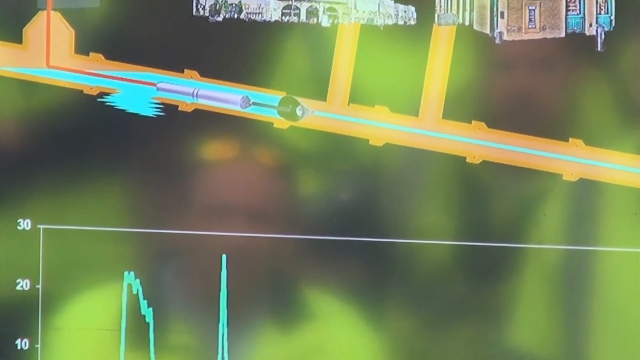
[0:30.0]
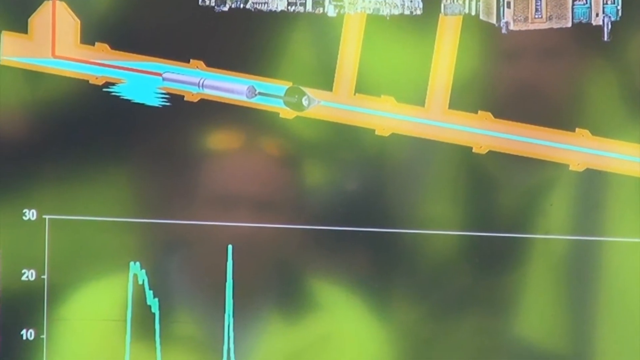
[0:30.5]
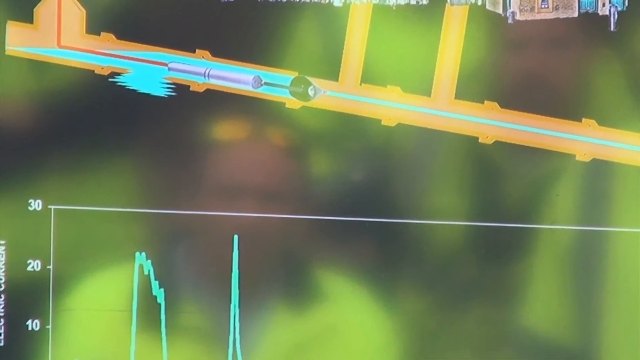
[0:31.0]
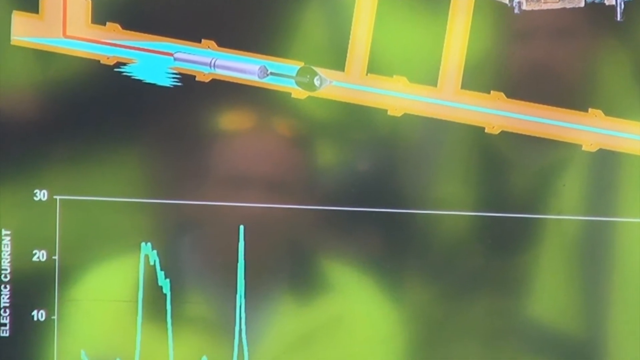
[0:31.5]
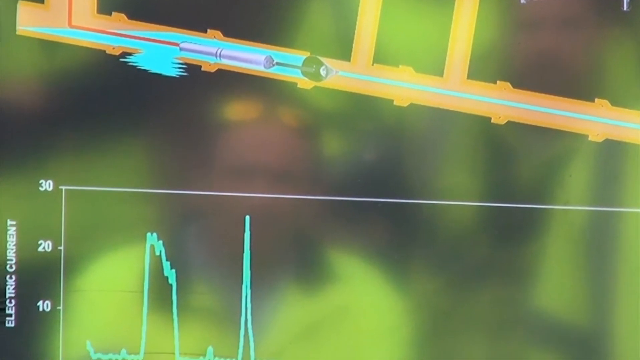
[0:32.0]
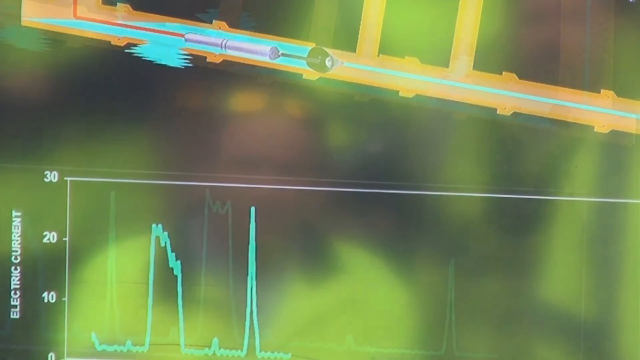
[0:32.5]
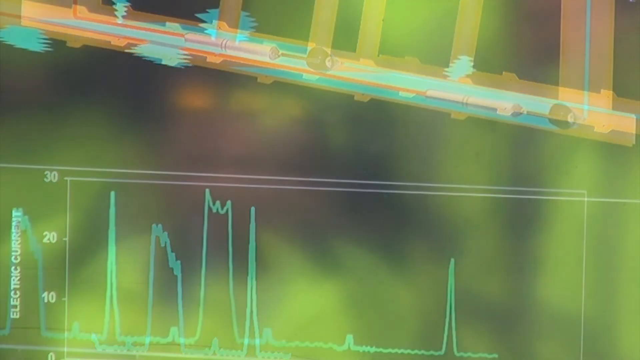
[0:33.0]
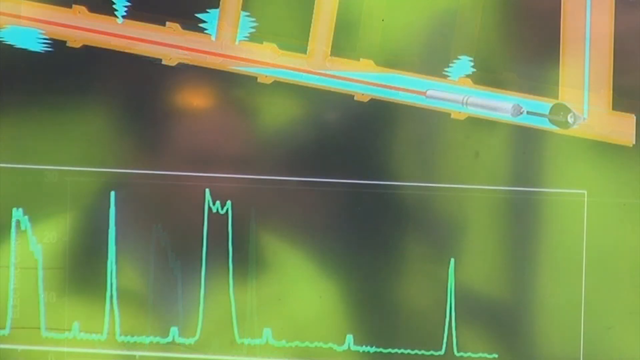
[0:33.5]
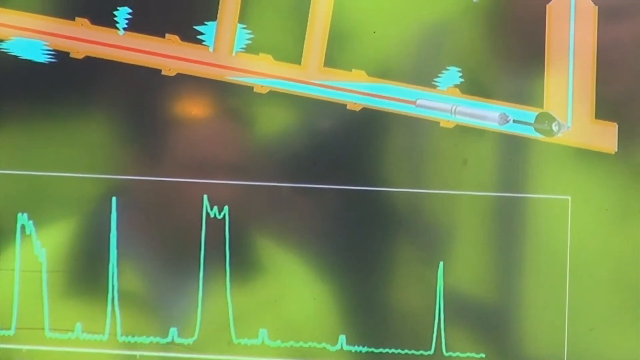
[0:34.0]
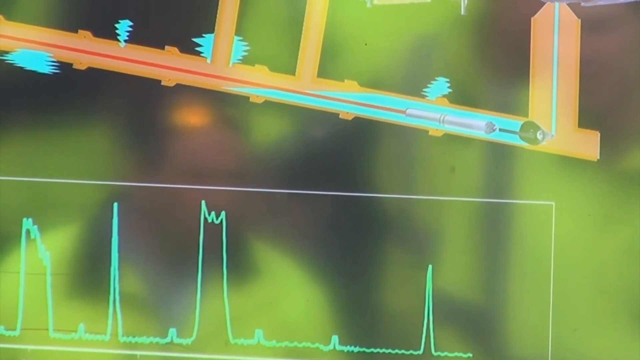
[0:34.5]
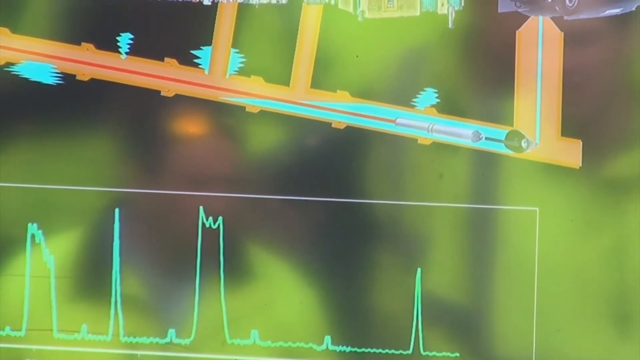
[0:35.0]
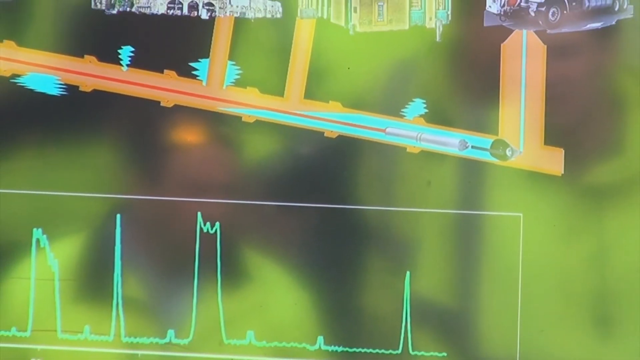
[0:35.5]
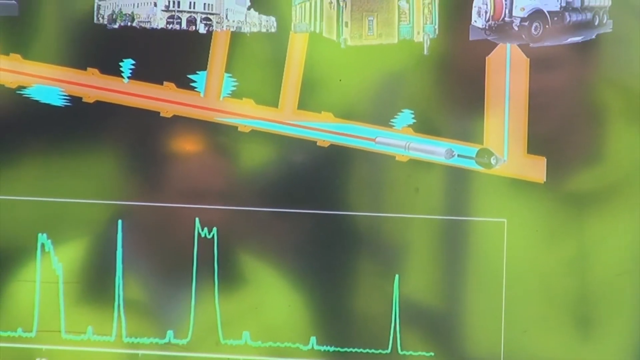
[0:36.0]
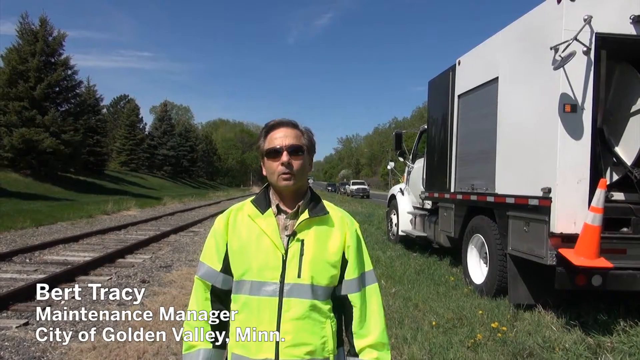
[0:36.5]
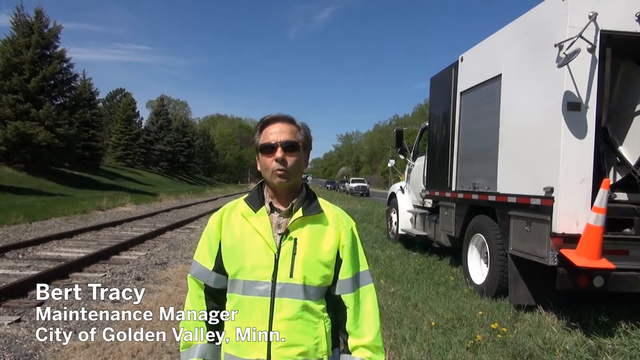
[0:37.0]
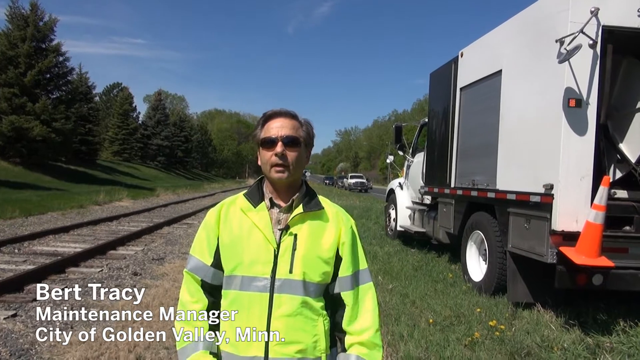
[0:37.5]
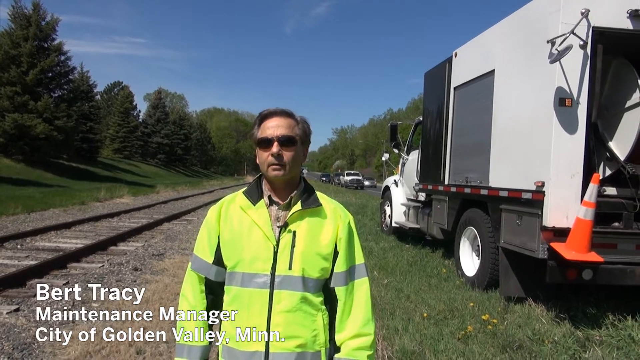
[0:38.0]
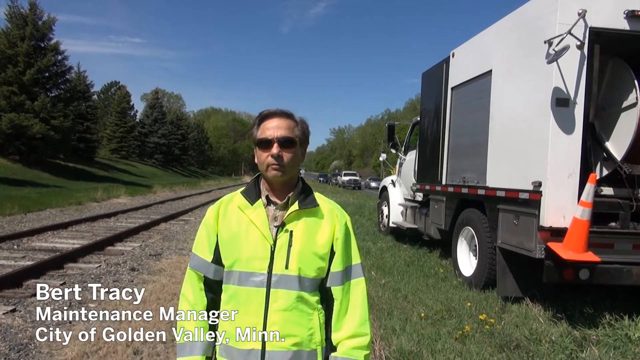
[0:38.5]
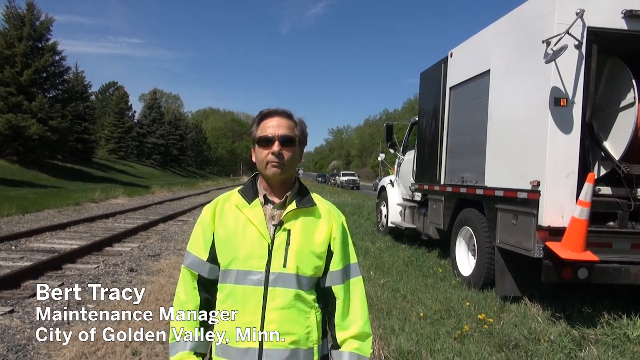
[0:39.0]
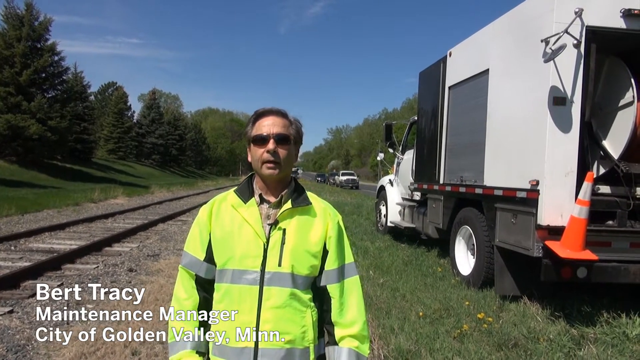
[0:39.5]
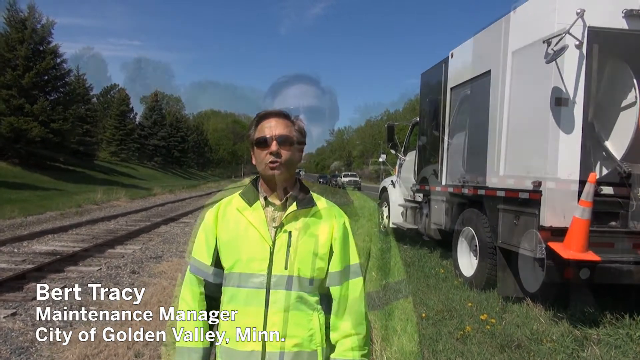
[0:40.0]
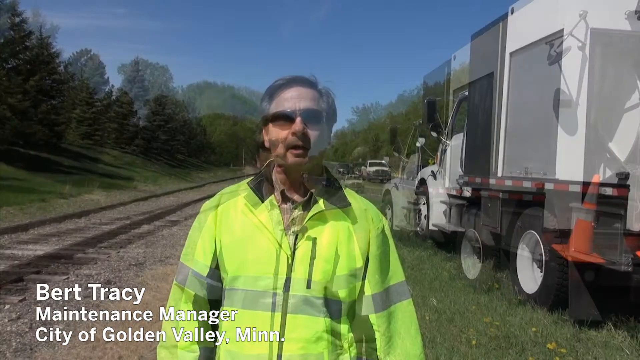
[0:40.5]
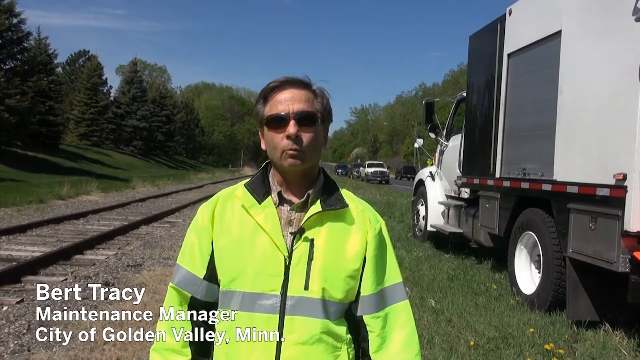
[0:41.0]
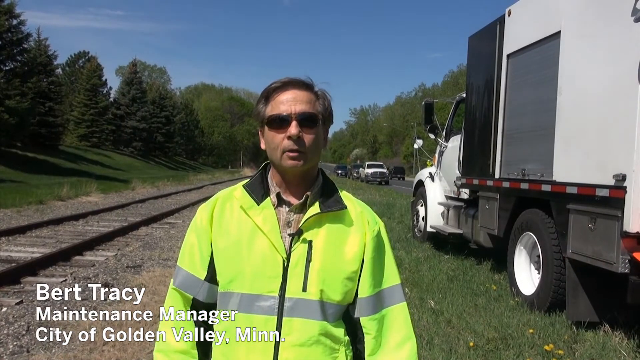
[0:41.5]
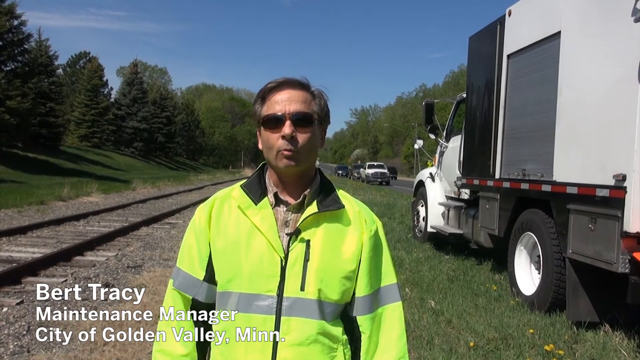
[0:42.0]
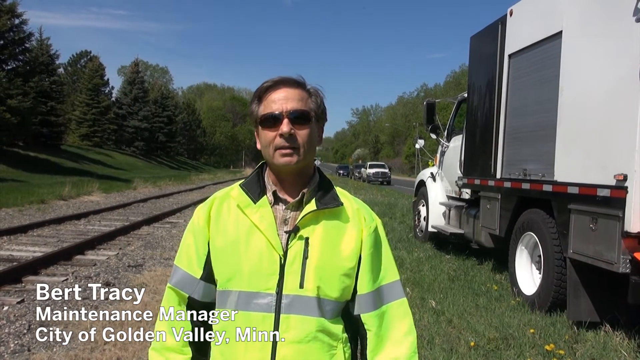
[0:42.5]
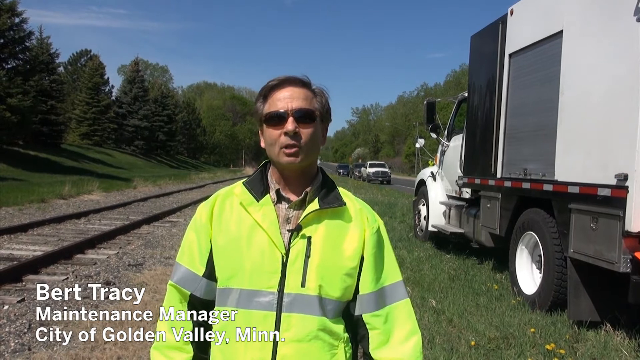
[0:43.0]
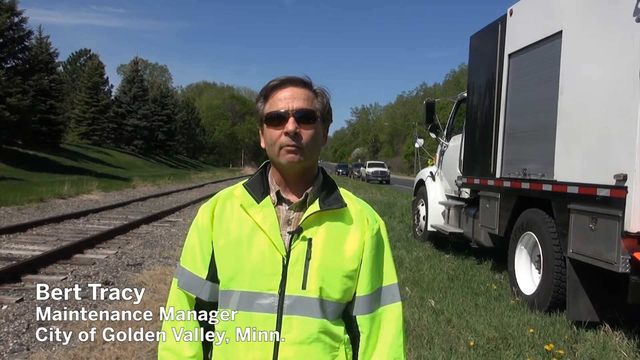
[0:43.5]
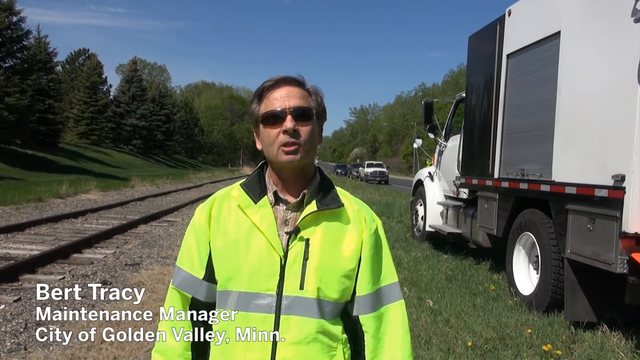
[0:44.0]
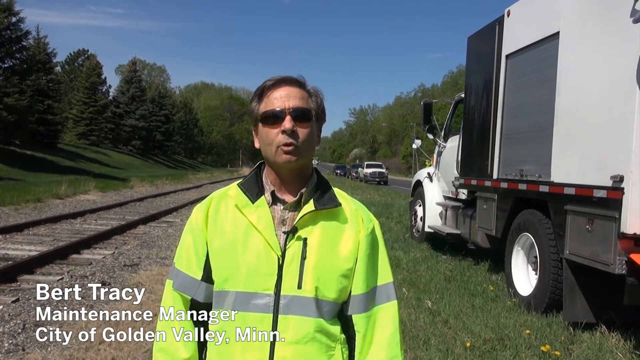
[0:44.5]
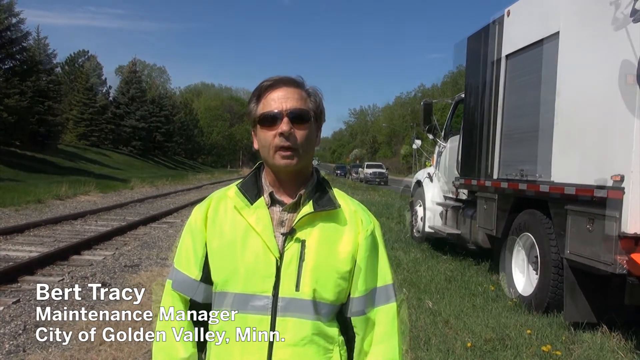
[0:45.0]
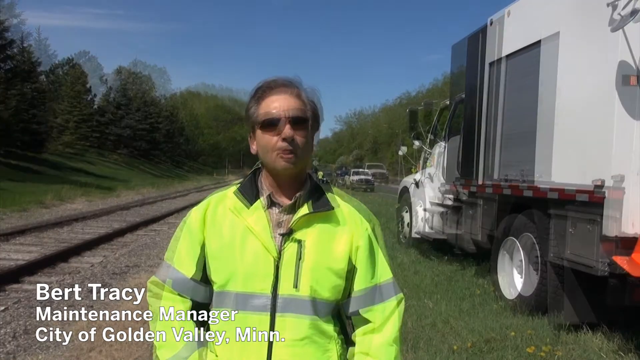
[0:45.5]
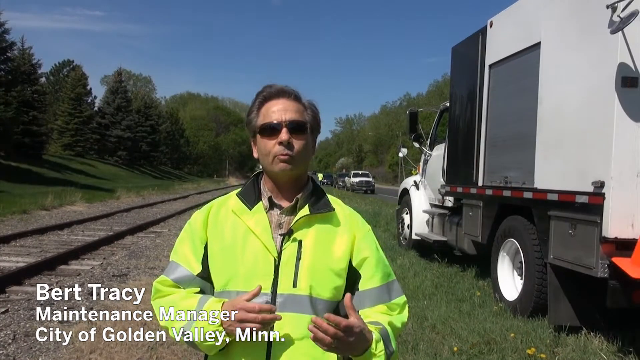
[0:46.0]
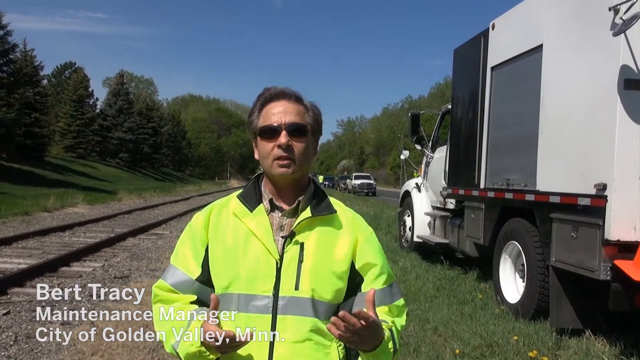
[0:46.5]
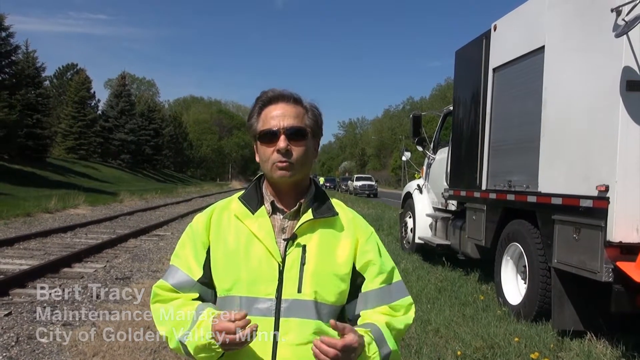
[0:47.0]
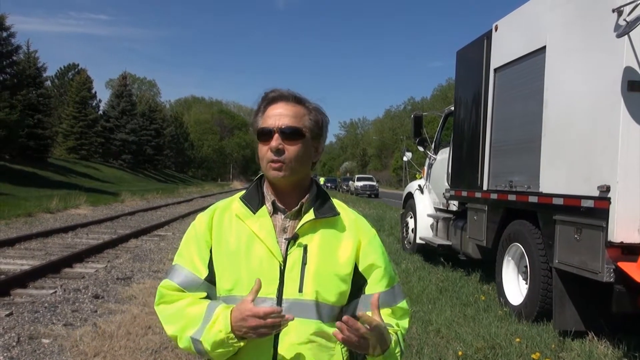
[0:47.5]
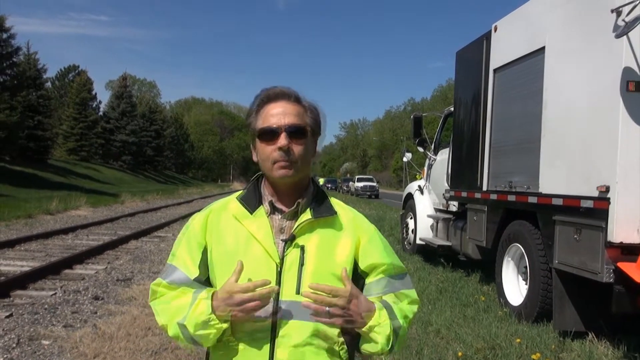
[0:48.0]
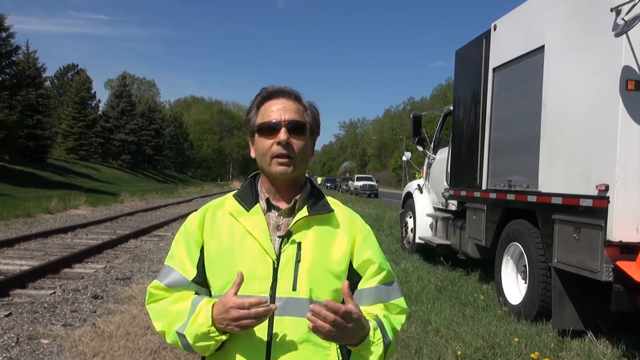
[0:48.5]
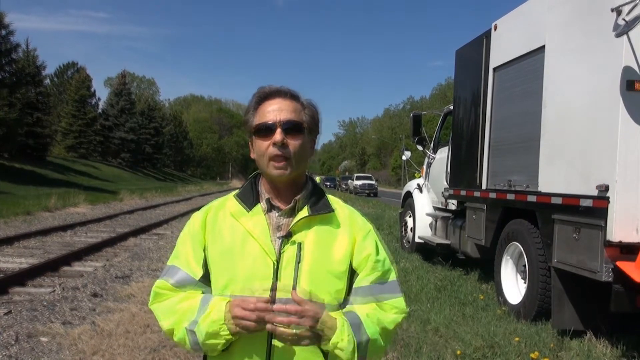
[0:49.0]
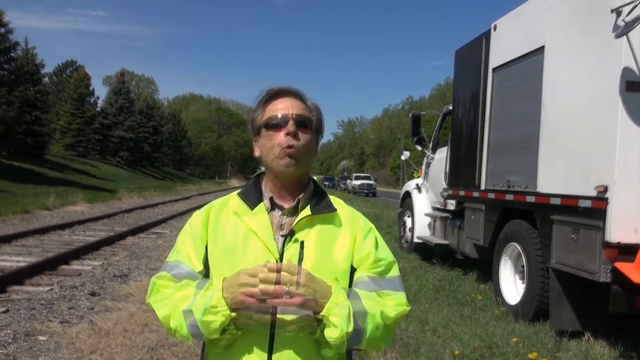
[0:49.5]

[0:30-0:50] The graphic of the pipeline running underground beneath the buildings continues; it is a drawing, an illustration of buildings rather than a real picture, and more graphs are shown. The video then returns outside to a man named Bert Tracy, a manager. The skies are blue, and a white truck is to his left (the viewer's right), with another truck and a few vehicles in the background. He is by railroad tracks with a lot of trees and a lot of green. A construction cone is on the back of the truck. He talks while wearing sunglasses that are kind of crooked on his face, and a light flashes on the truck. The video then goes back to the graphs. The pipeline is possibly a water pipeline.